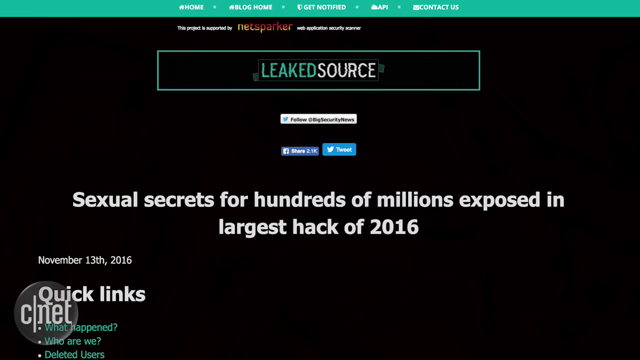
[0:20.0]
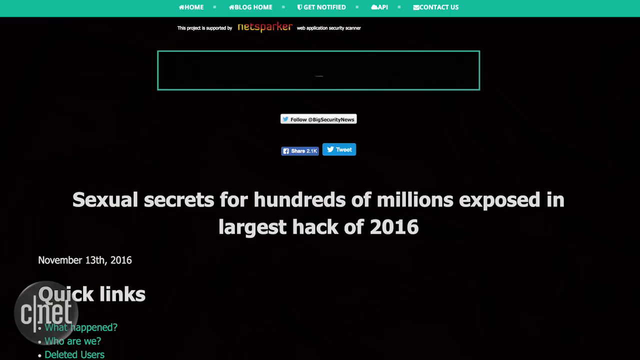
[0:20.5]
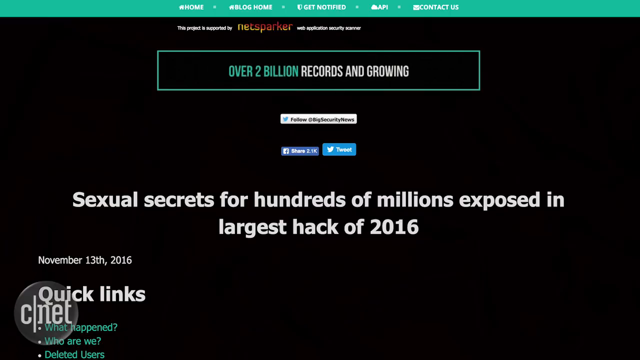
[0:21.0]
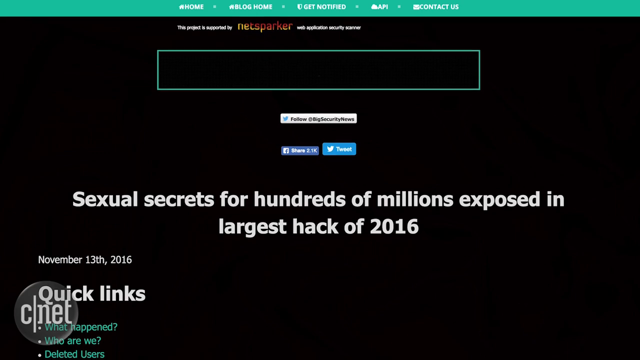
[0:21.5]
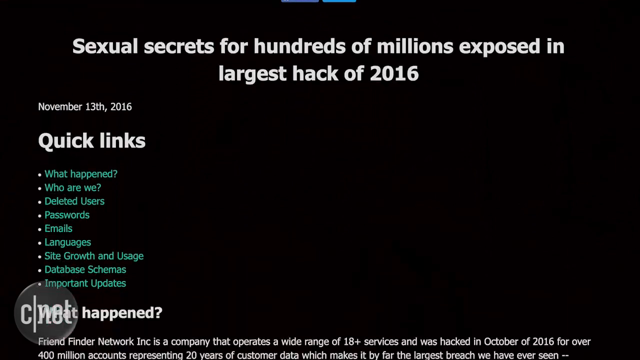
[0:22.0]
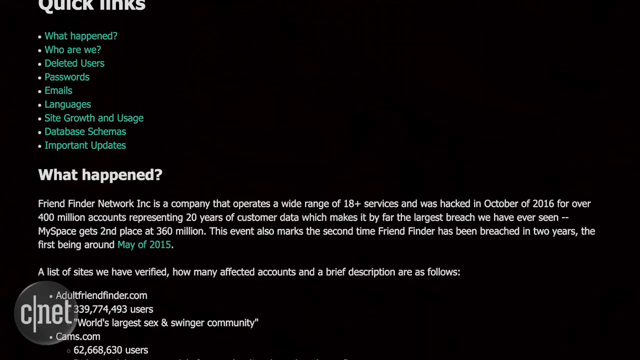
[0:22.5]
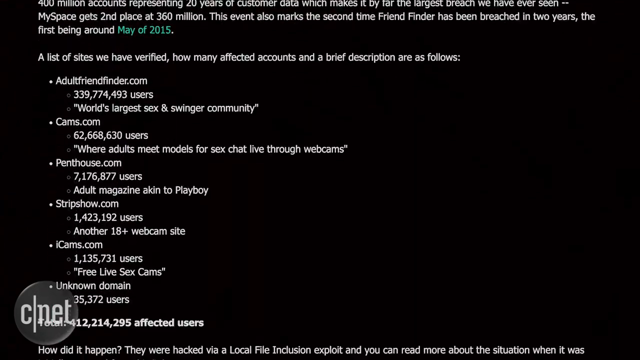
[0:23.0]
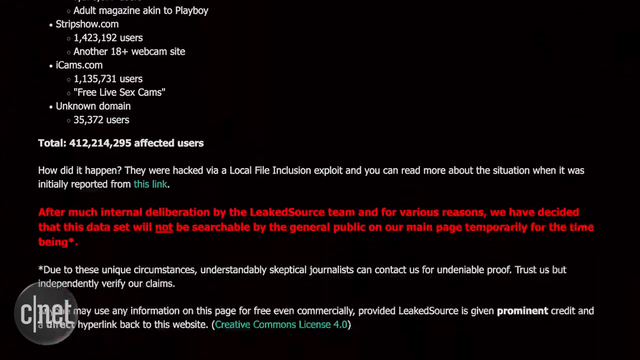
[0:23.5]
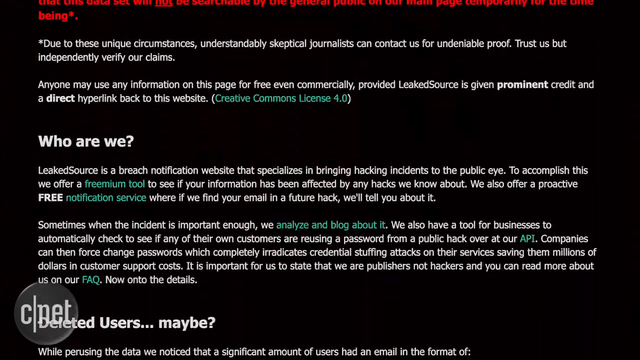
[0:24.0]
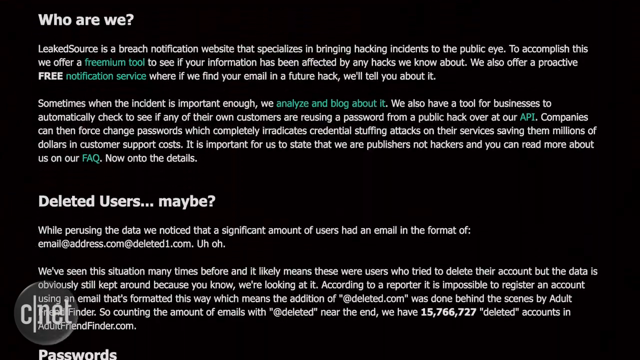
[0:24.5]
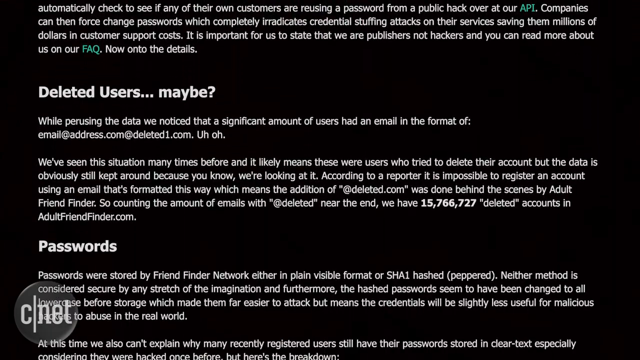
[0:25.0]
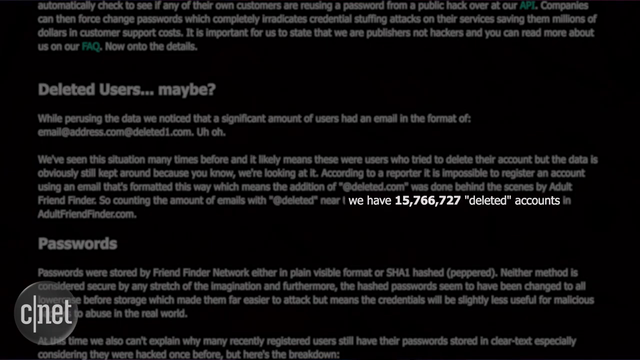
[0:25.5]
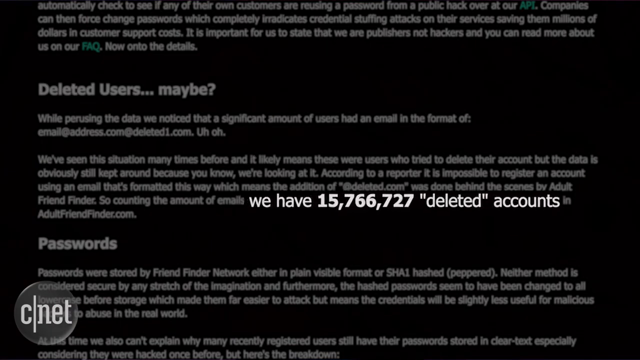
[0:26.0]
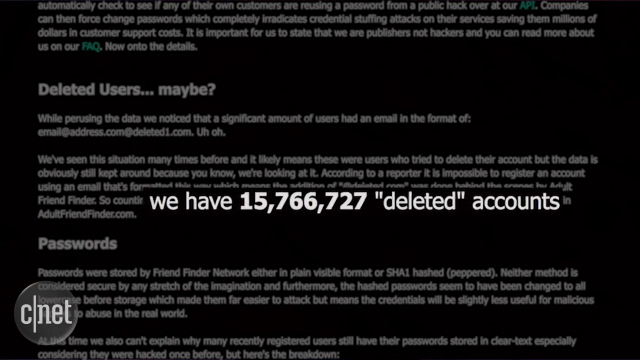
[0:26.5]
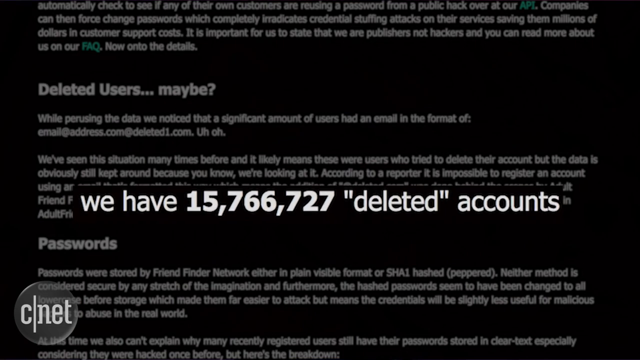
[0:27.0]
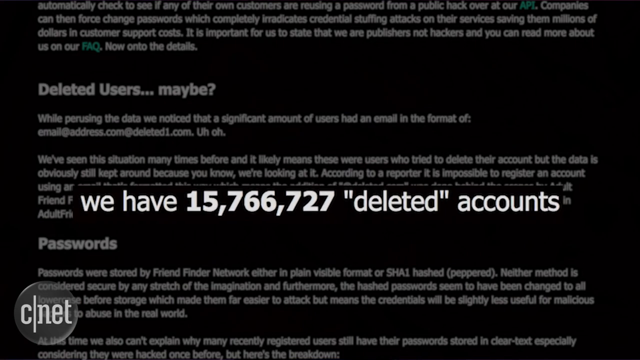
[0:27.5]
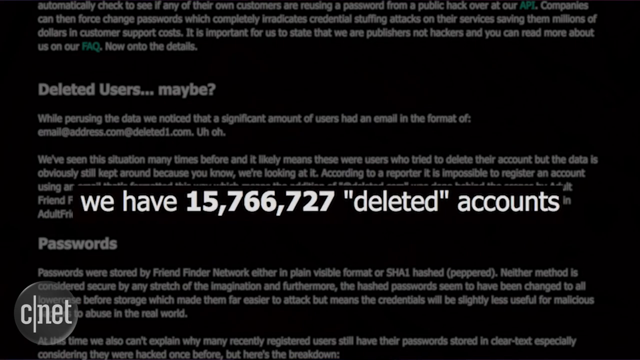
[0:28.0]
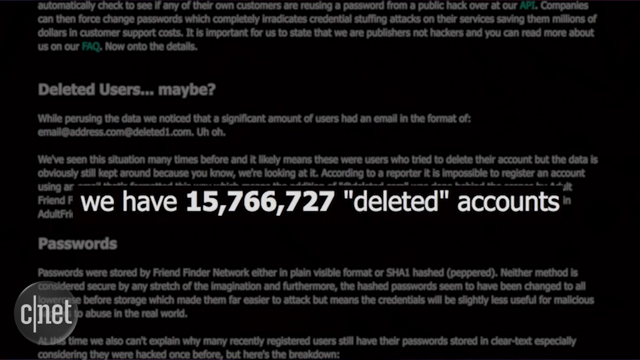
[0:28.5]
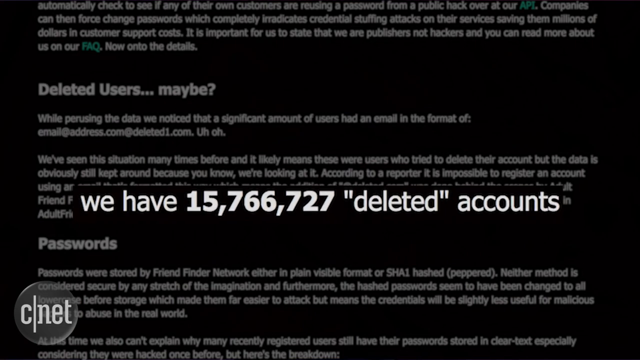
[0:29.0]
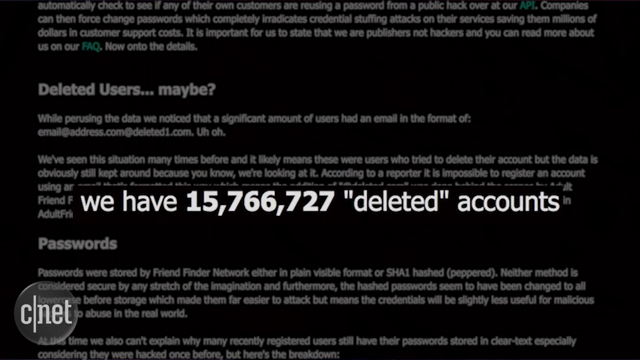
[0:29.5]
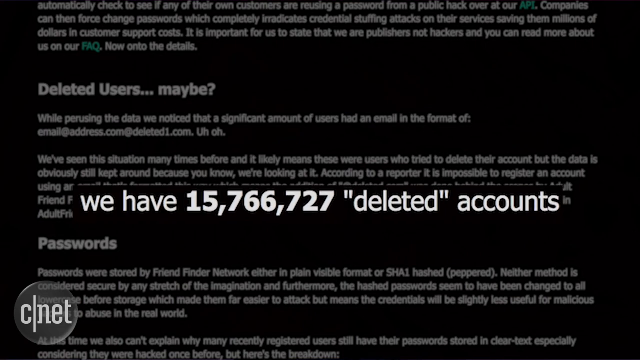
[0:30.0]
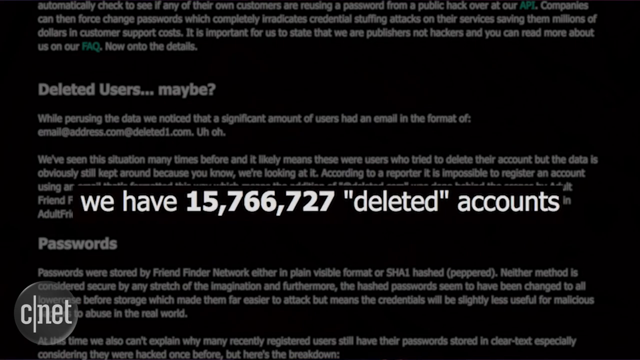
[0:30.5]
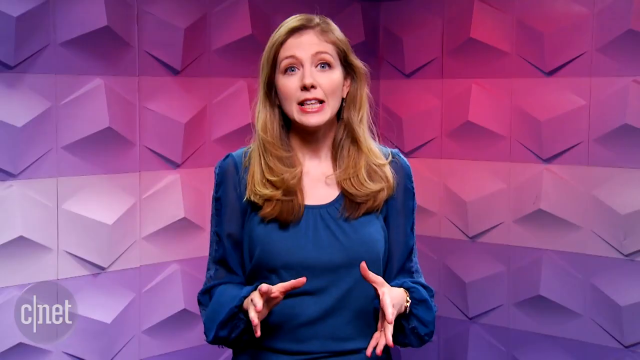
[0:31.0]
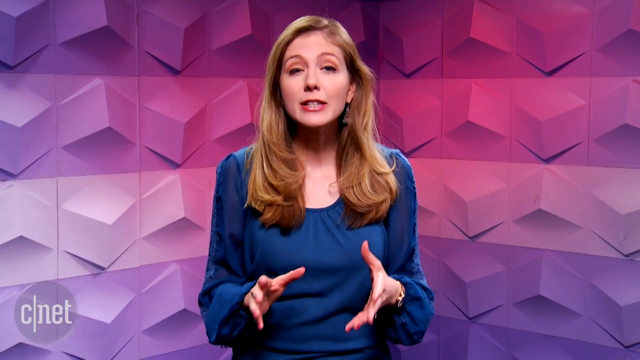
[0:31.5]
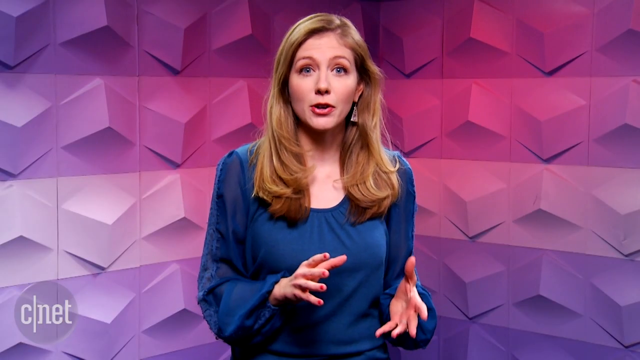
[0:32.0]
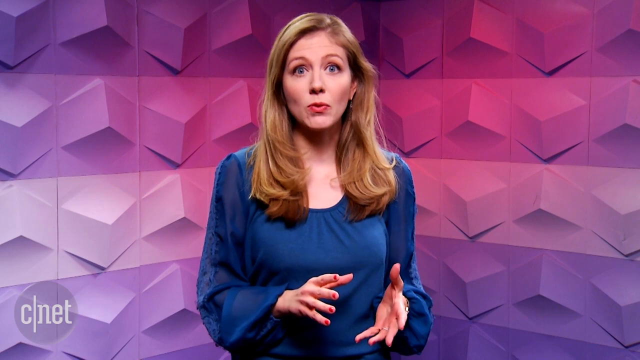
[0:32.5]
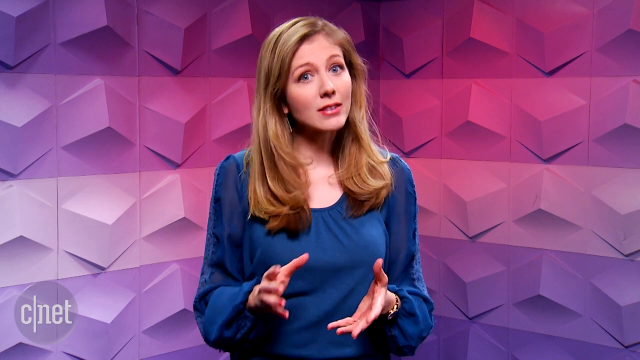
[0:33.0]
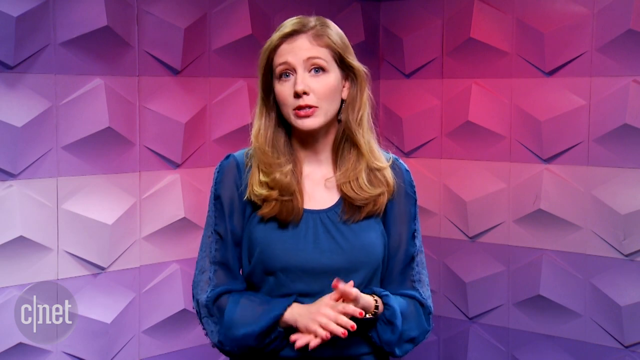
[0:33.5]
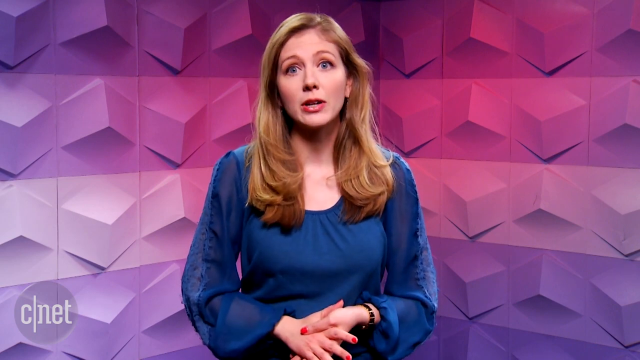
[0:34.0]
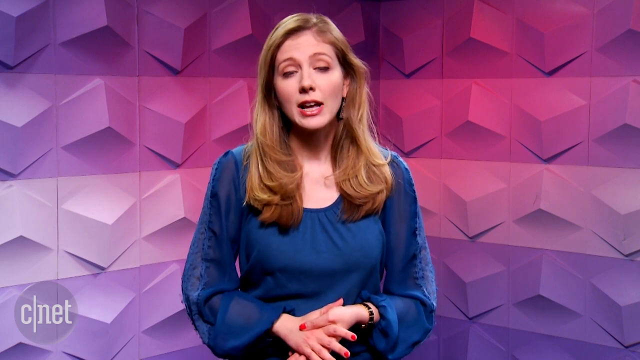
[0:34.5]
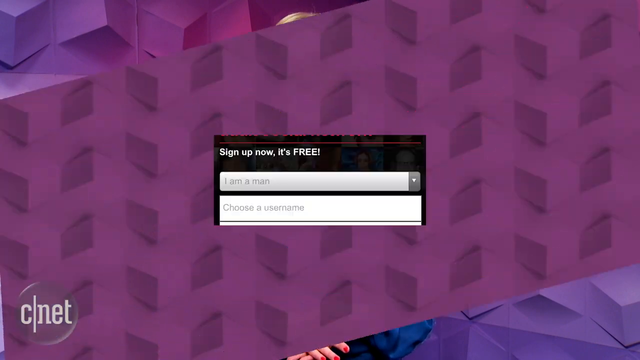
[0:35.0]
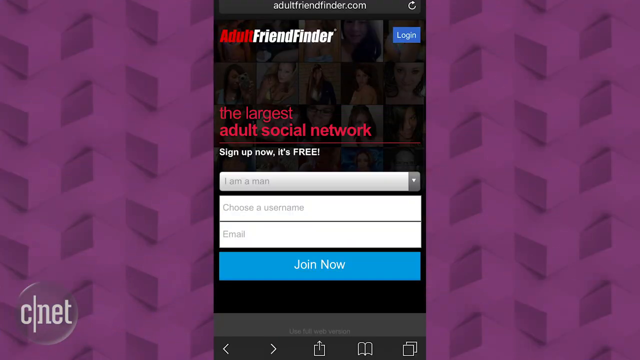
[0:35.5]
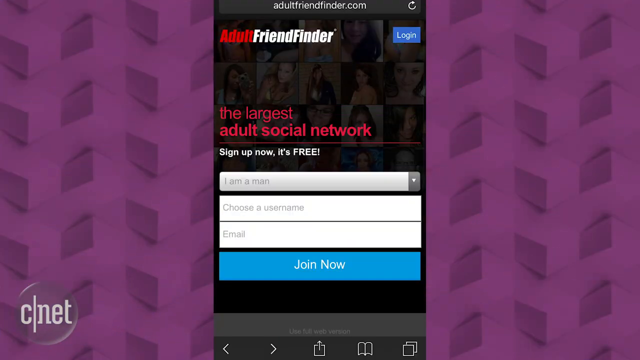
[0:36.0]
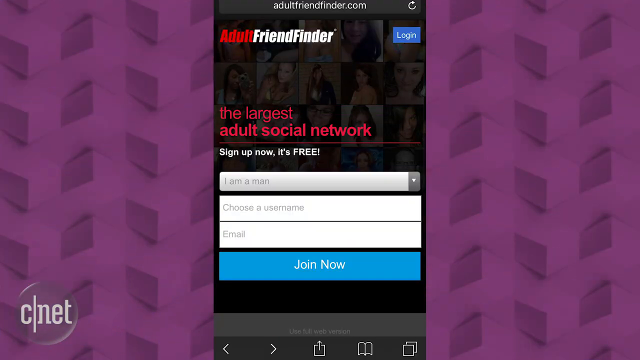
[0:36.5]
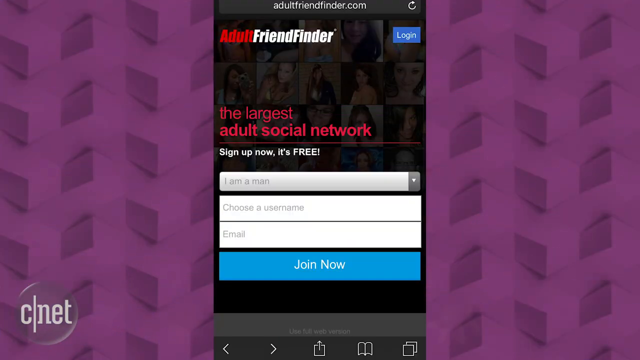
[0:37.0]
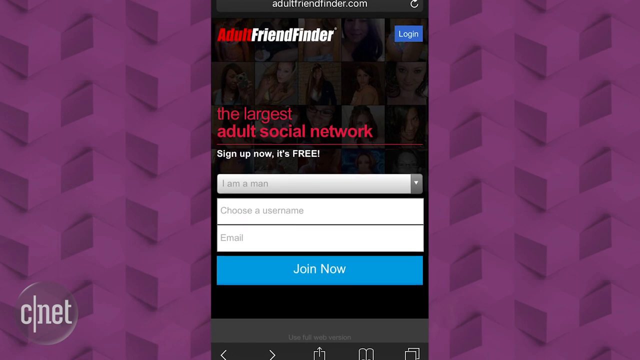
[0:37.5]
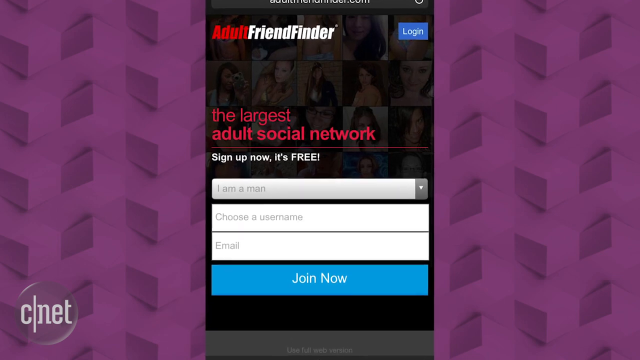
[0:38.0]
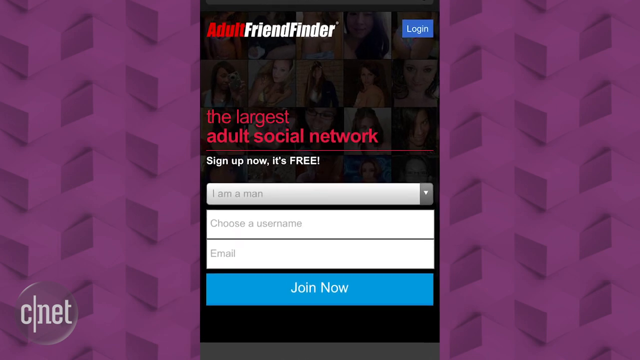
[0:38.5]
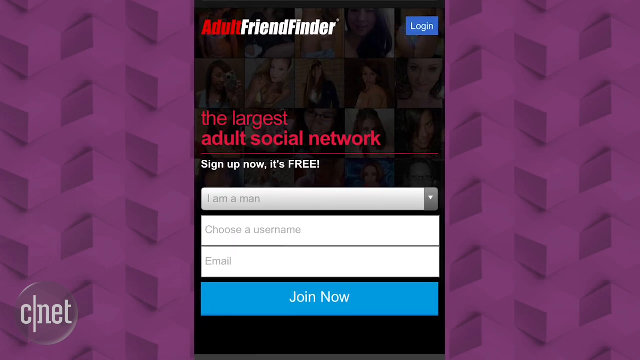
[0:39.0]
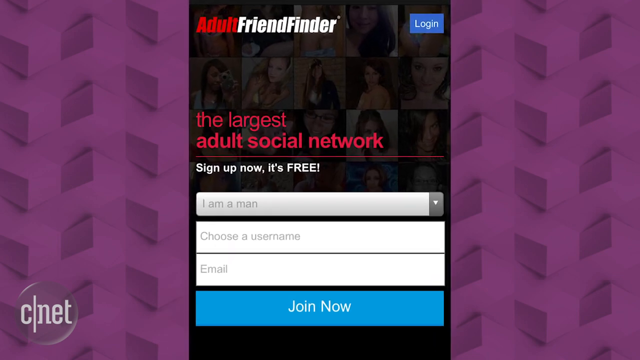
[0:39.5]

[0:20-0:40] A page appears, possibly a homepage or a link, apparently a quick link. The date is the 13th of November, 2016. The subject is the leaked information in the largest hack of 2016, in which hundreds of millions of sexual secrets came to light, and it shows that 15 million accounts were deleted. Bridget appears, explaining more about the adult friend finder. A sign-up page shows a login option, "sign up now," "It's free," "I'm a man" or "I'm a woman," fields for a username and email, and a join button. When Bridget speaks, the background behind her is a shade of pink.